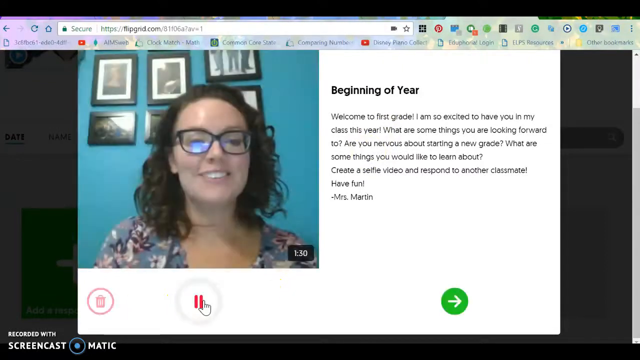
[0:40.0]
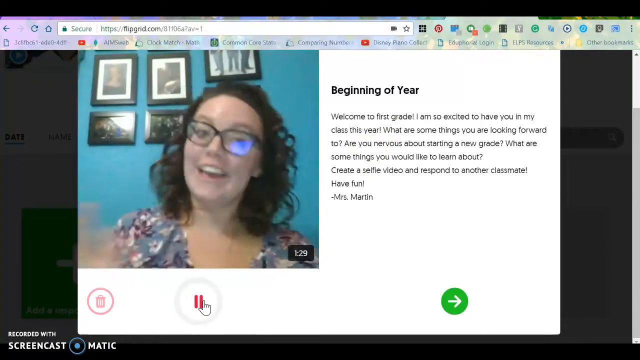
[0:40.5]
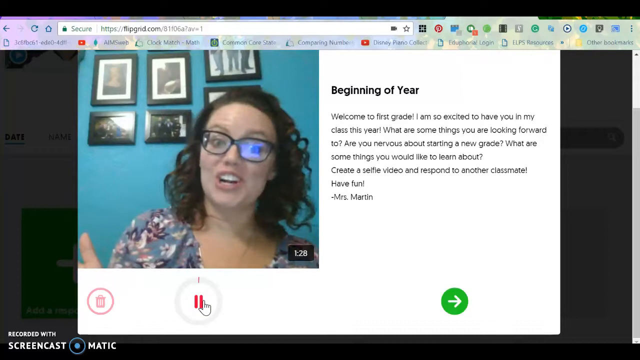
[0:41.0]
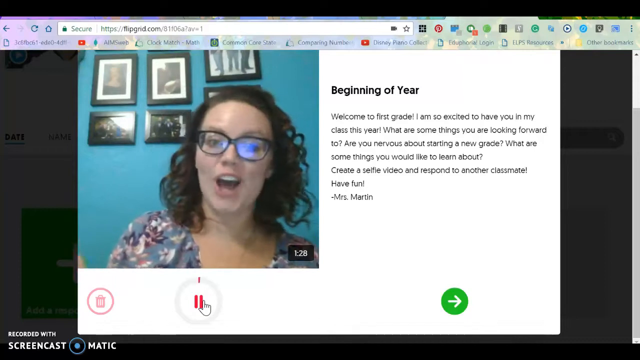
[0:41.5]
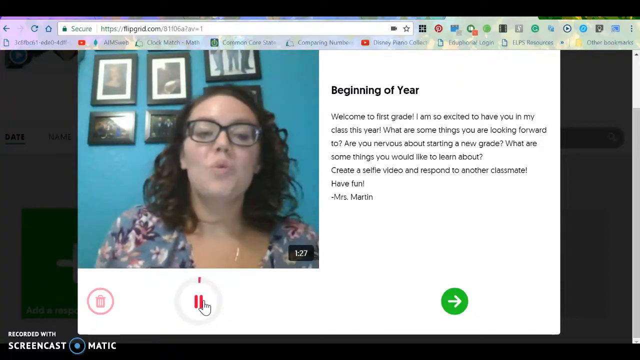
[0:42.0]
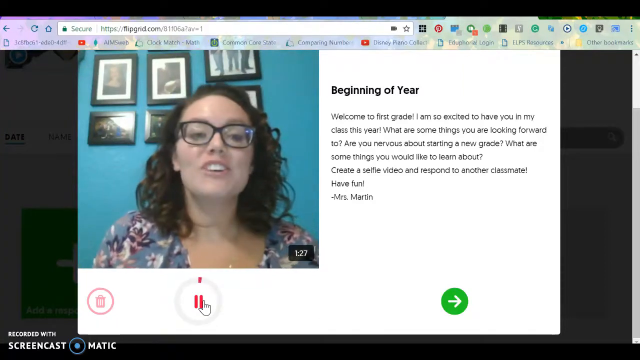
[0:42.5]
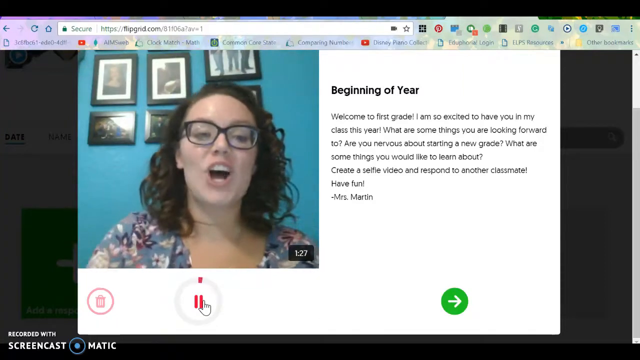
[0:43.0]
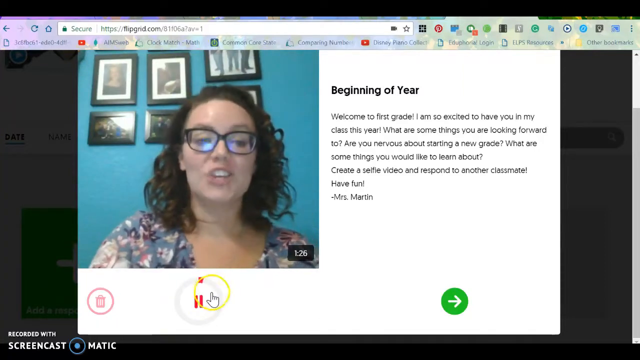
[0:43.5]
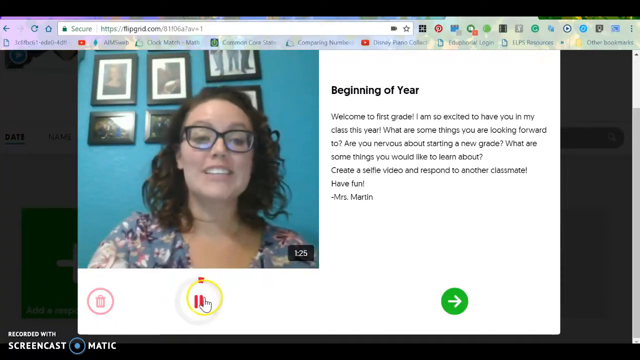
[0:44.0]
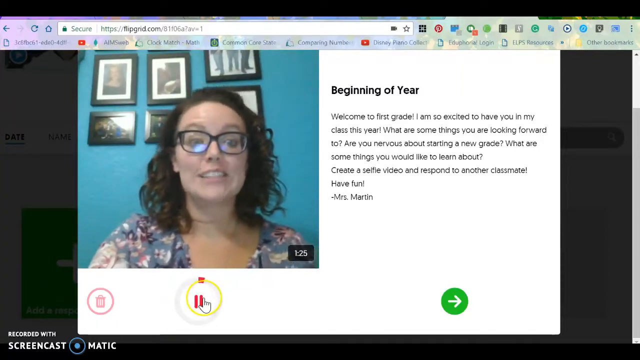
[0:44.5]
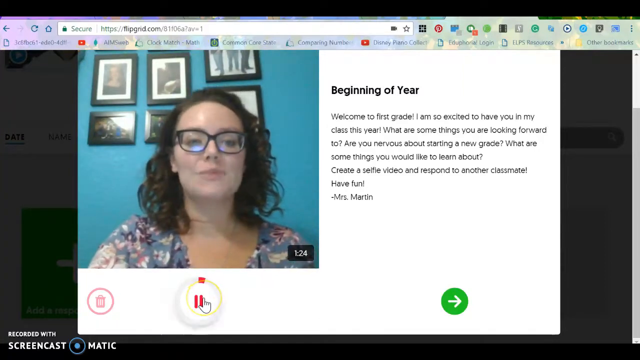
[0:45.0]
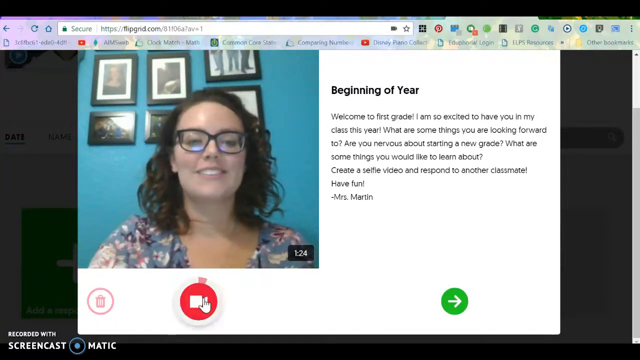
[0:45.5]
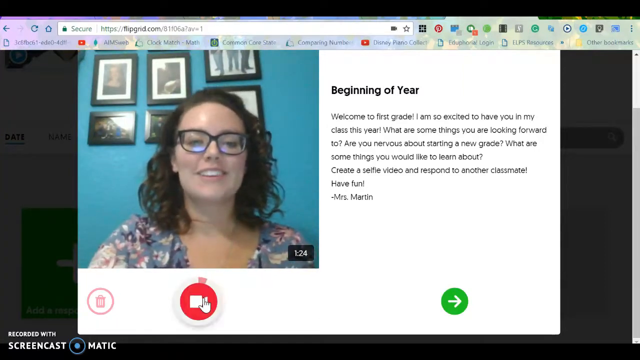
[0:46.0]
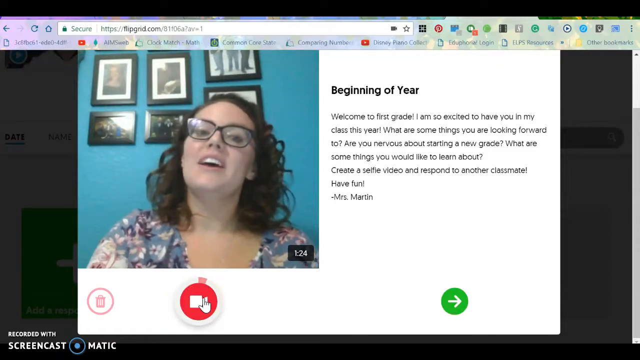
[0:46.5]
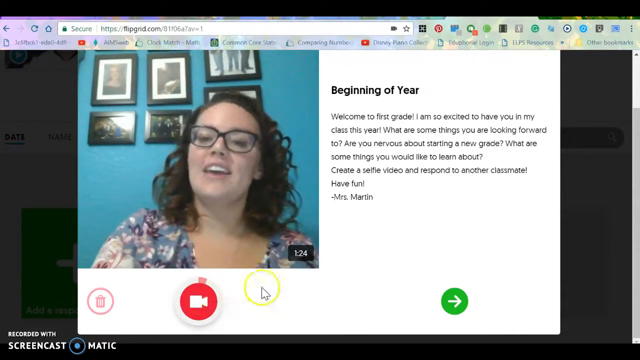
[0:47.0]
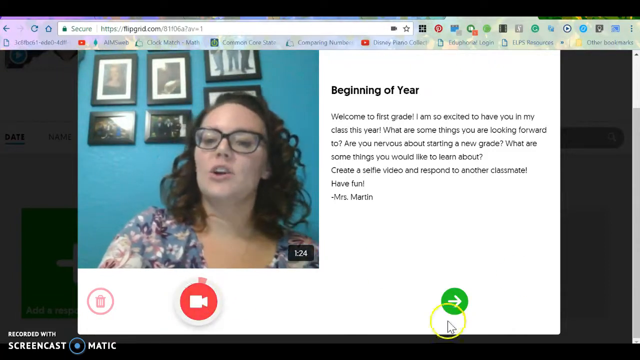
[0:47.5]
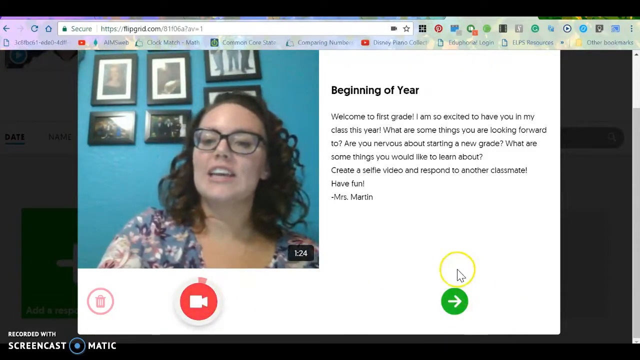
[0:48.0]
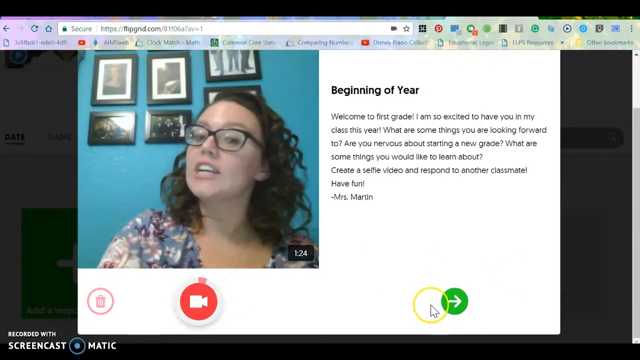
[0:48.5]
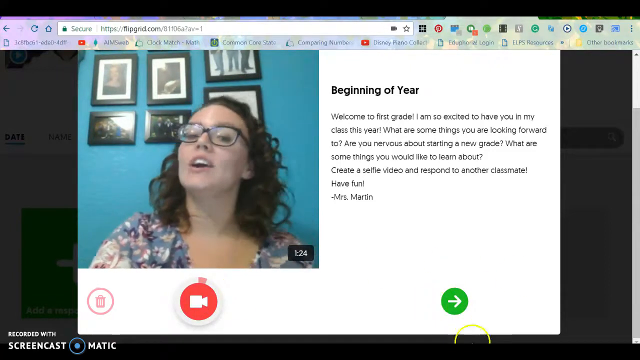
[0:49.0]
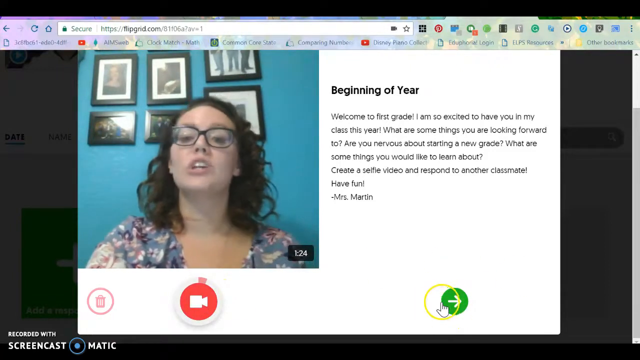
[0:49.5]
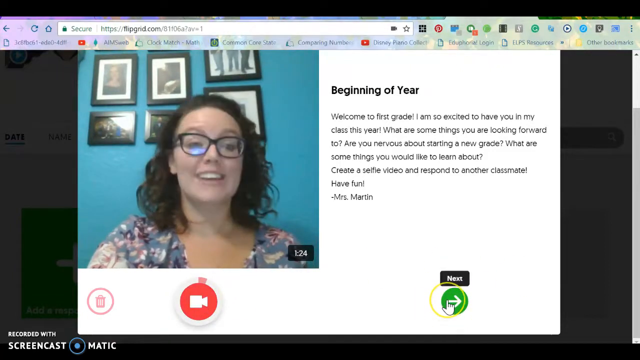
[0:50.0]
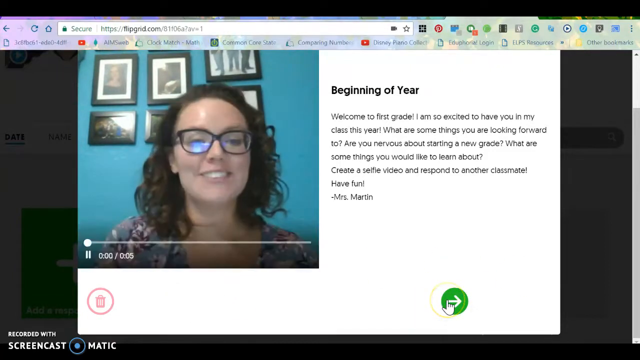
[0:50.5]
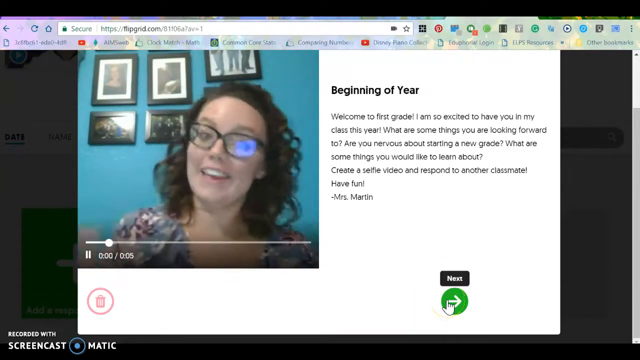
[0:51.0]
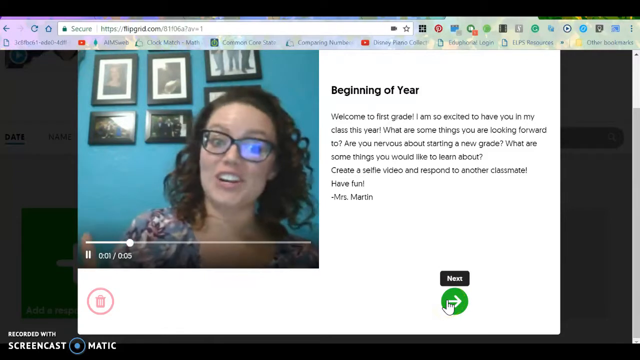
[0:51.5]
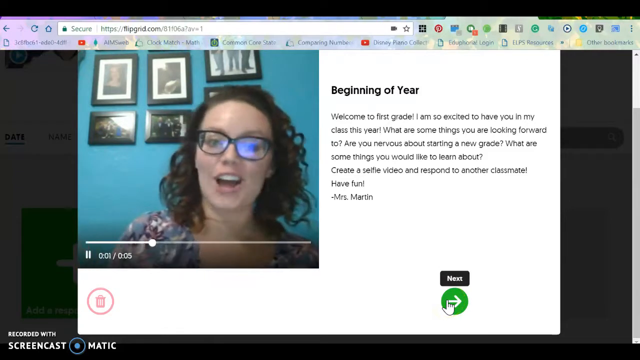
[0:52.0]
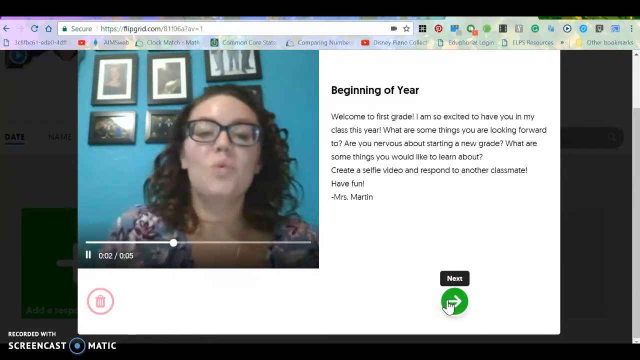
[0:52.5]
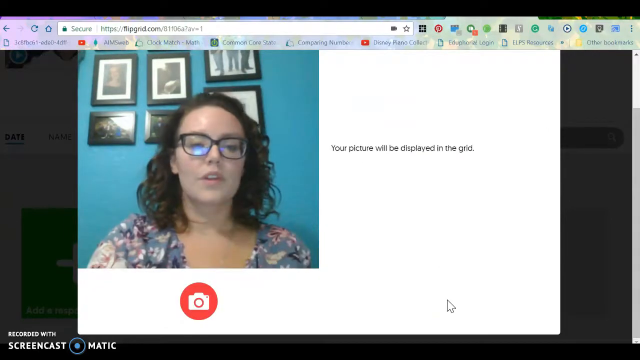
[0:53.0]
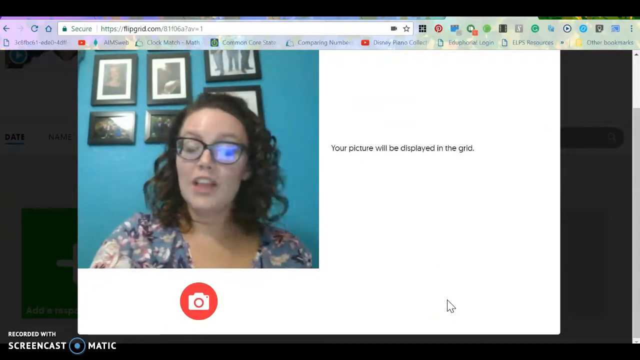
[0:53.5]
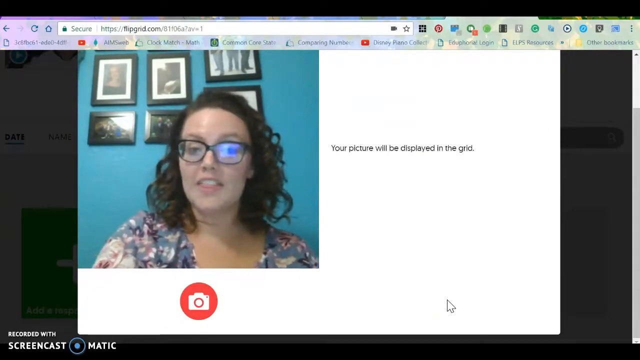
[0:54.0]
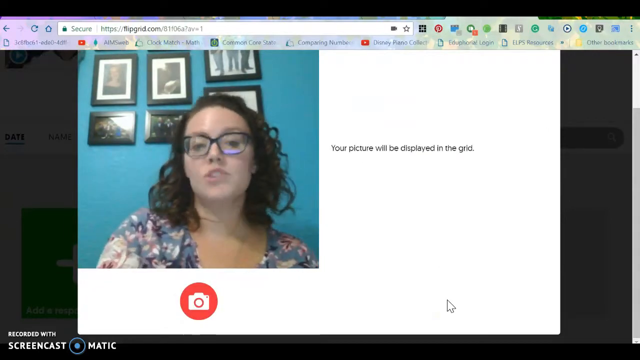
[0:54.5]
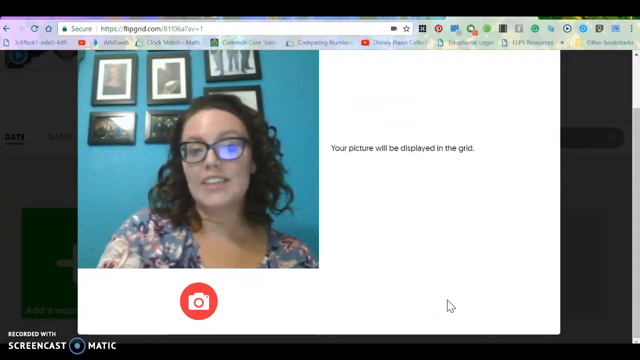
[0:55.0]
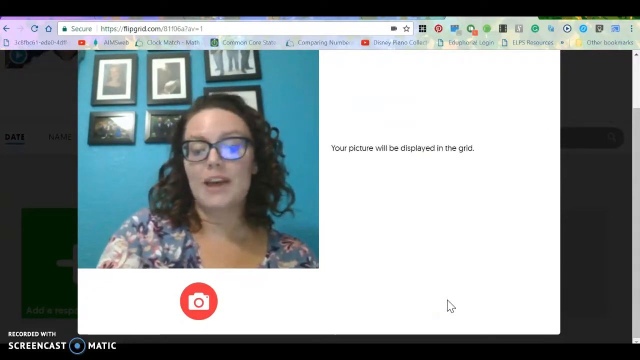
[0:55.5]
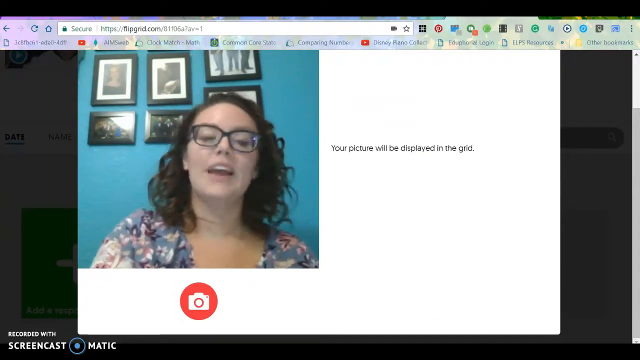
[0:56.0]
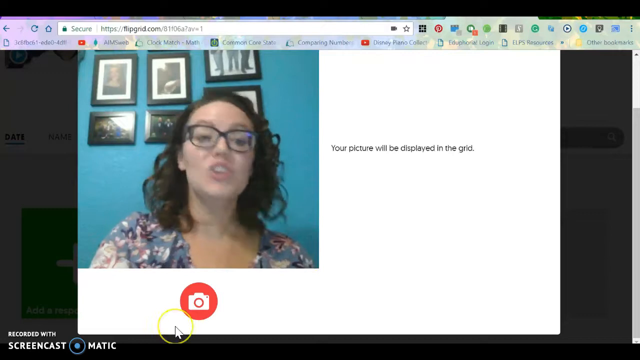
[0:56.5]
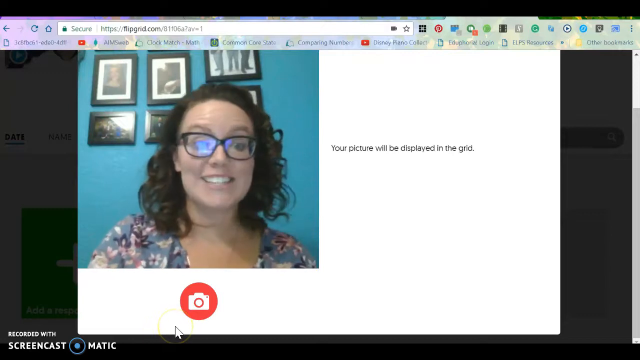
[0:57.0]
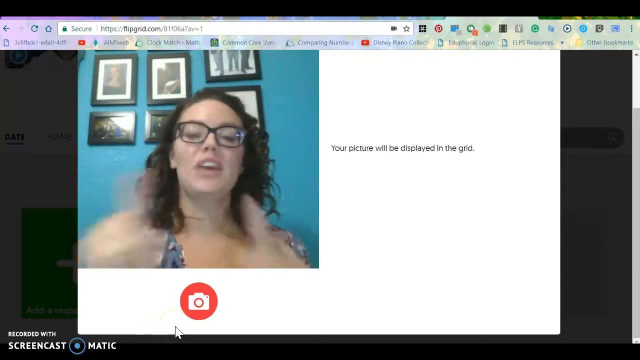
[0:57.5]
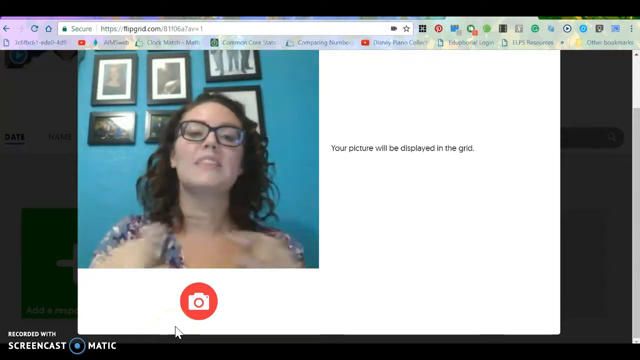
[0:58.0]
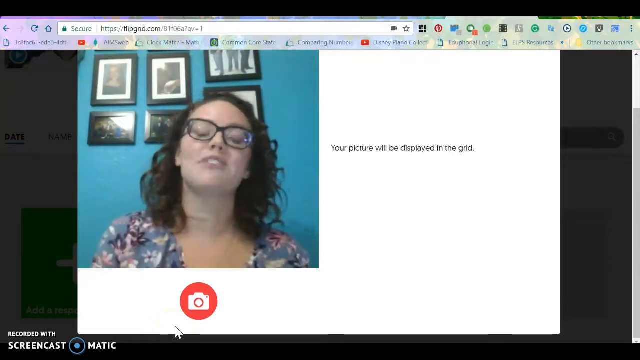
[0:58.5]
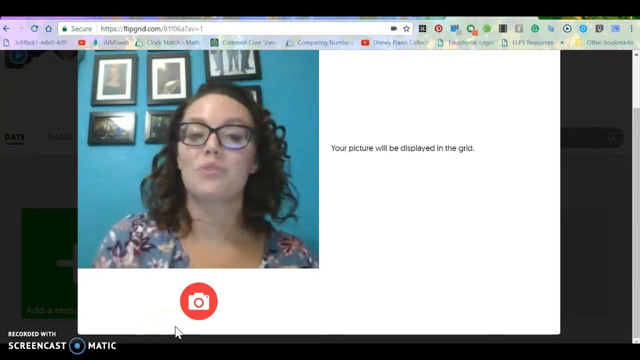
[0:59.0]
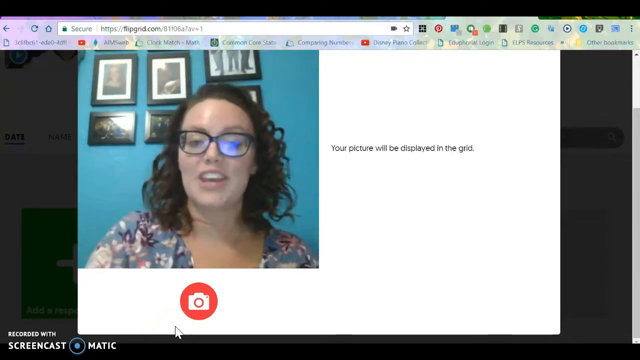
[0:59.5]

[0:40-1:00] The beginning-of-year page shows the picture of Miss Lauren and the text "Welcome to first grade. I am excited to have you in my class this year. What are some things you are looking forward to? Are you nervous about starting a new grade?" The person navigating starts recording, and after recording presses a green button that says "forward." It seems that Ms. Lauren is the one showing the tutorial and may be the one doing the screen recording. Behind her is a blue wall with a bunch of pictures that look like family pictures, so she may be filming in her house.